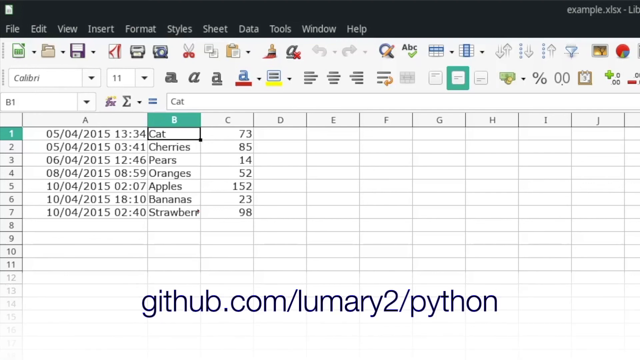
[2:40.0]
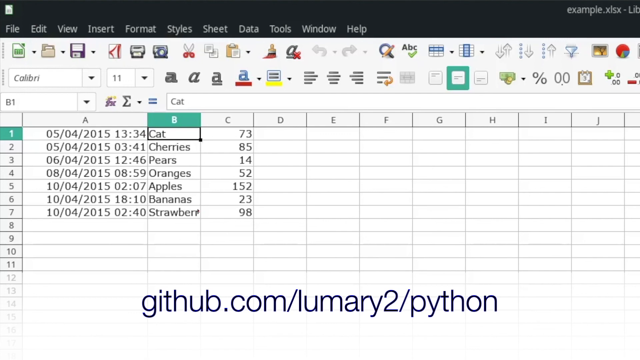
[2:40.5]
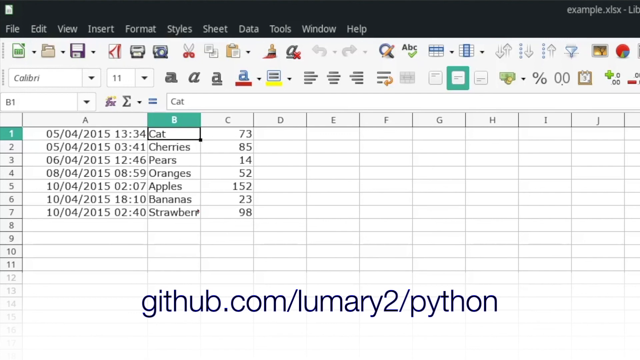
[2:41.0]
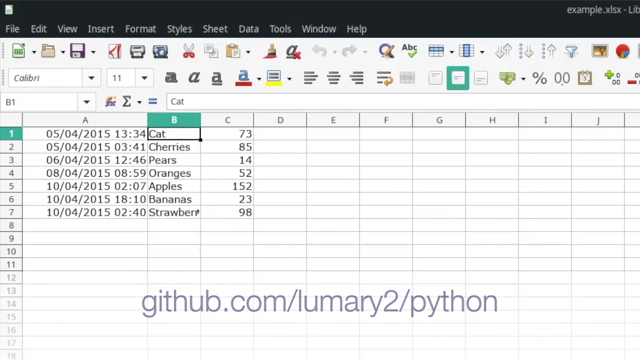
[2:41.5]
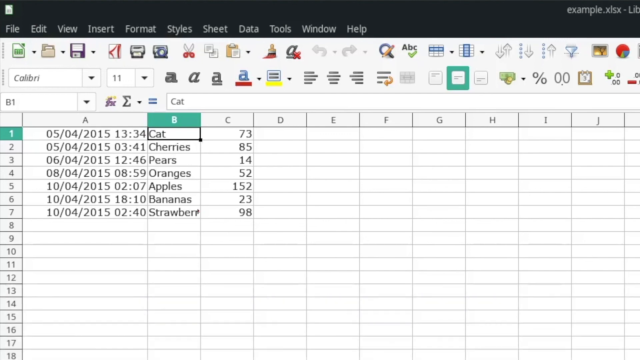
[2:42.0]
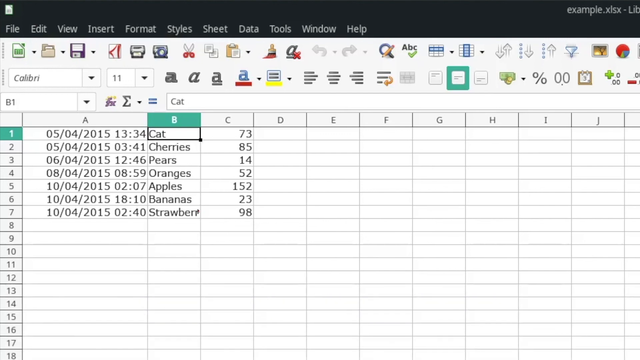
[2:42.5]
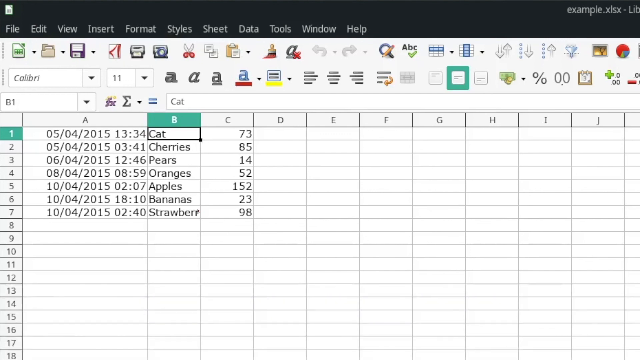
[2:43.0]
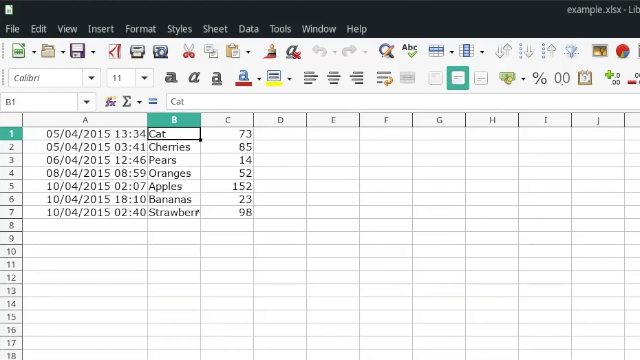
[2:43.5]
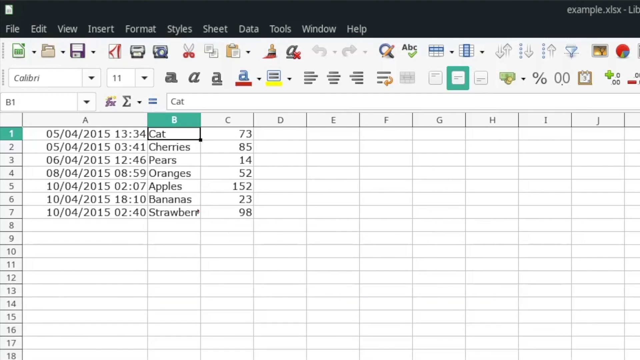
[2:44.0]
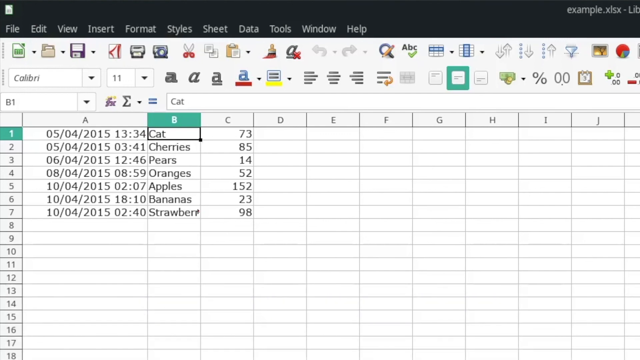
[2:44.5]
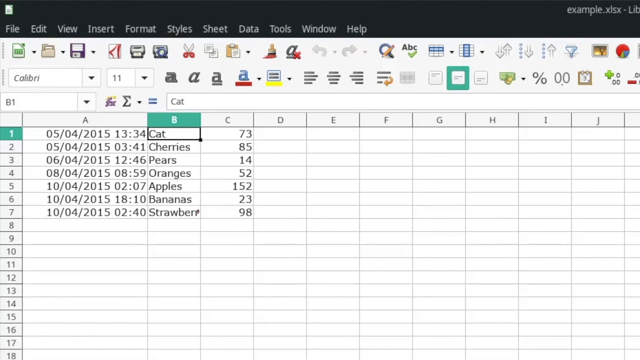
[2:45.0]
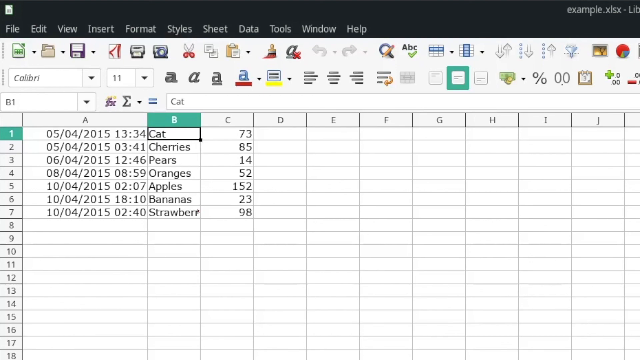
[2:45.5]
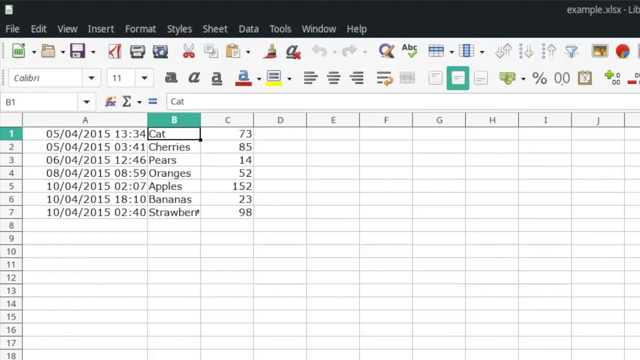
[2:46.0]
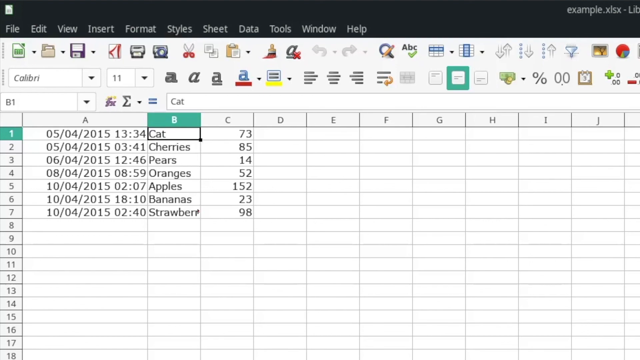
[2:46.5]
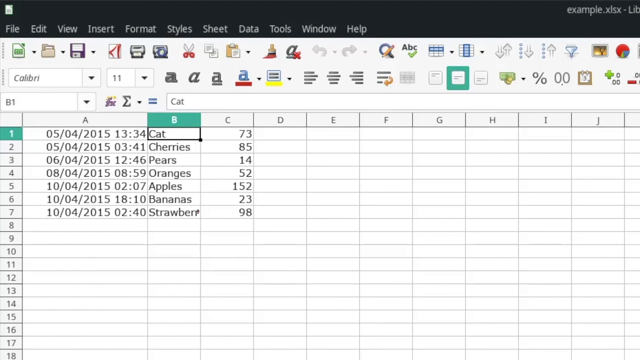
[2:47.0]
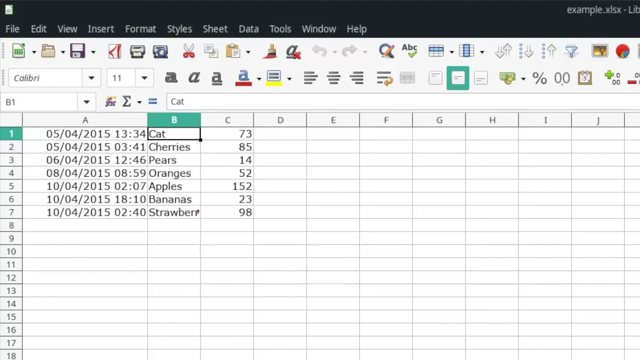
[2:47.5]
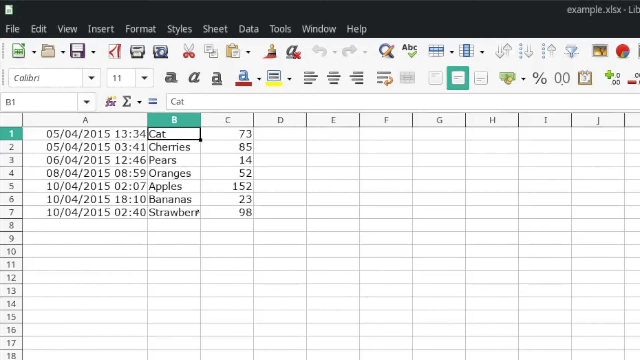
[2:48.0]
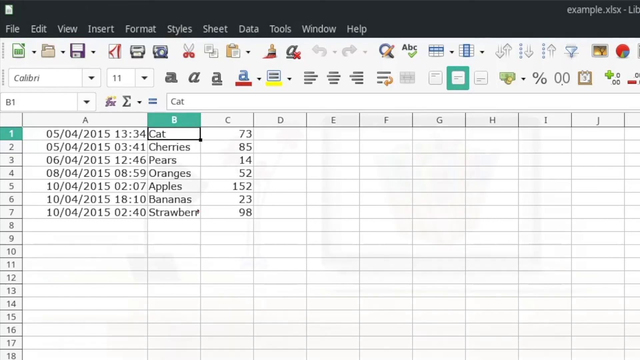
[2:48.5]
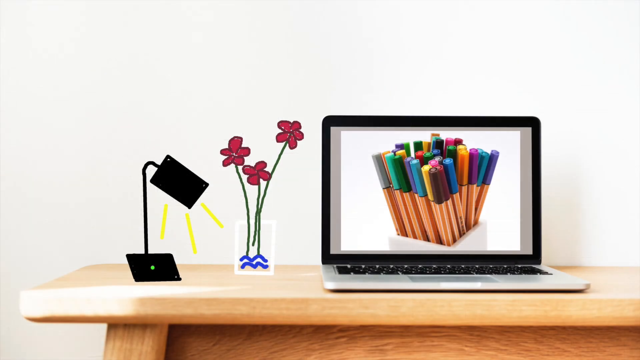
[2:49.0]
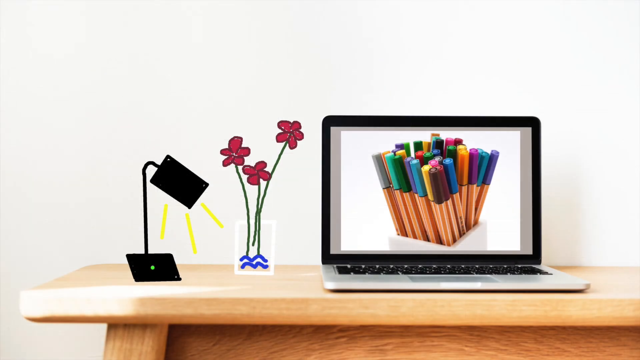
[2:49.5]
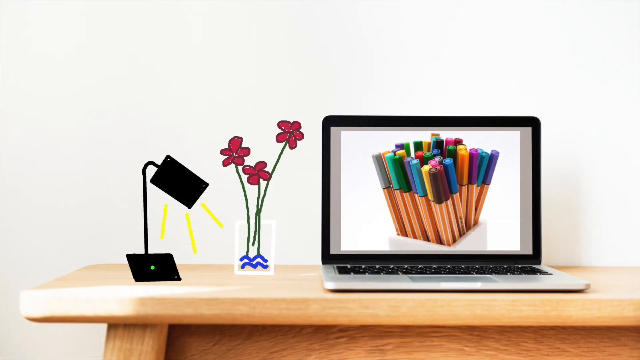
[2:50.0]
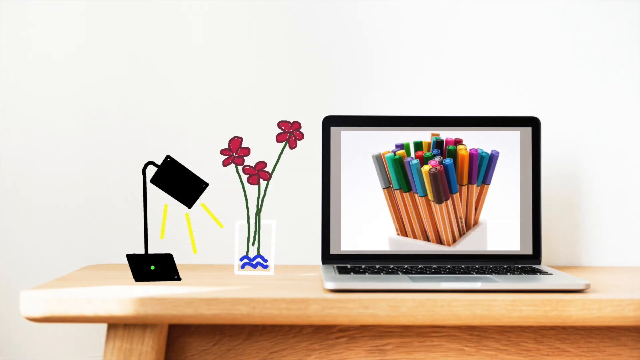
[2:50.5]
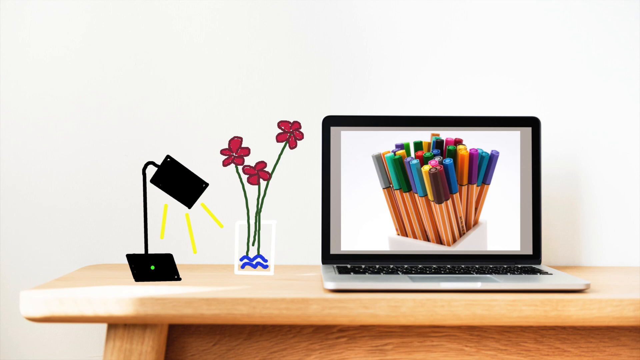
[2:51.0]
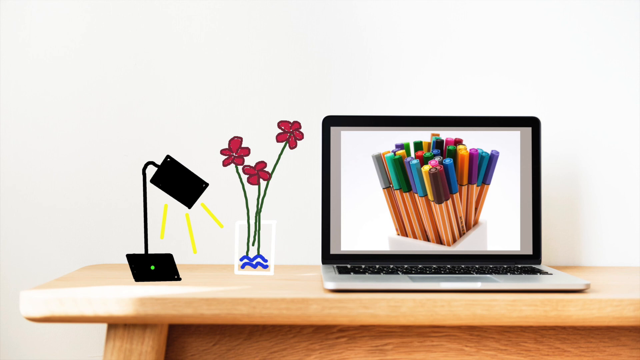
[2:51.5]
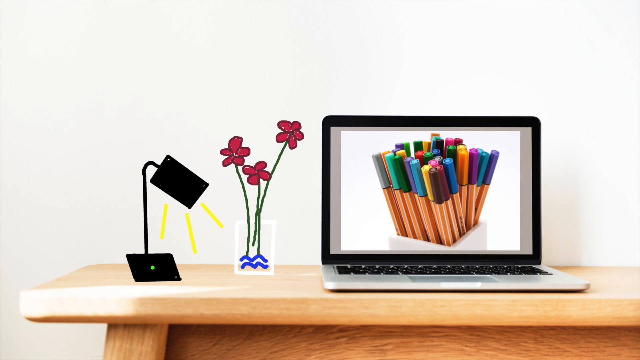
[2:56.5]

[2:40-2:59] A computer screen has a black strip at the very top containing, from left to right, the words "file, edit, view, insert, format, style, sheet, data, tools, window" and "help," with "example.xlsx - light" in the top right-hand corner. Below the strip the screen turns white, and the first row is a list of about 15 to 20 icons, including a pair of scissors with red handles, a paintbrush with red paint, the letters "ABC" with a green check mark underneath, and one that looks like a computer disk. Underneath is another row of icons and various controls, including four little letter A's in different fonts. Below are columns A through J from left to right and rows 1 to 18 from top to bottom. Row 1 says "cat," row 2 "cherries," row 3 "pears," row 4 "oranges," row 5 "apples," row 6 "bananas" and row 7 "strawberries," with a date and a time beside each one.